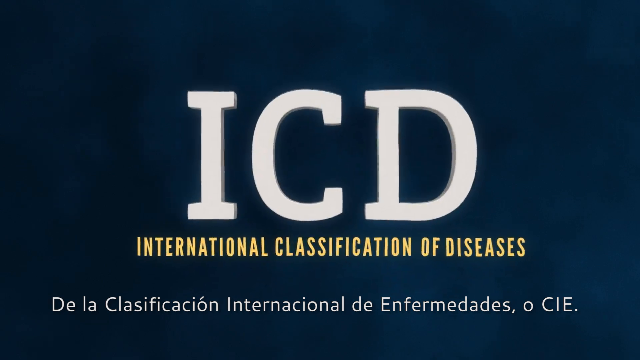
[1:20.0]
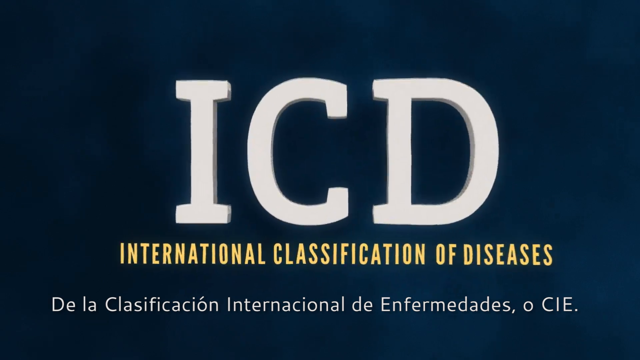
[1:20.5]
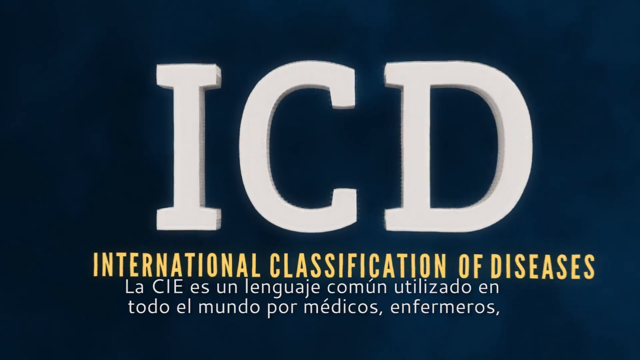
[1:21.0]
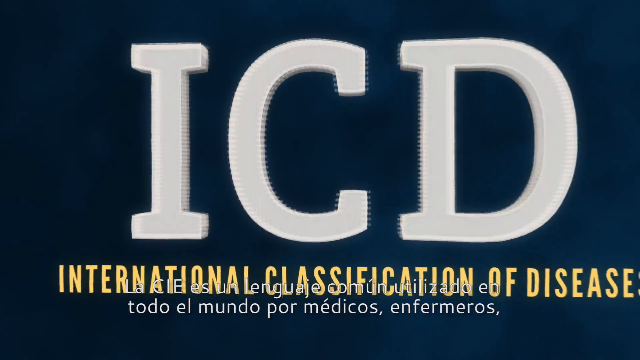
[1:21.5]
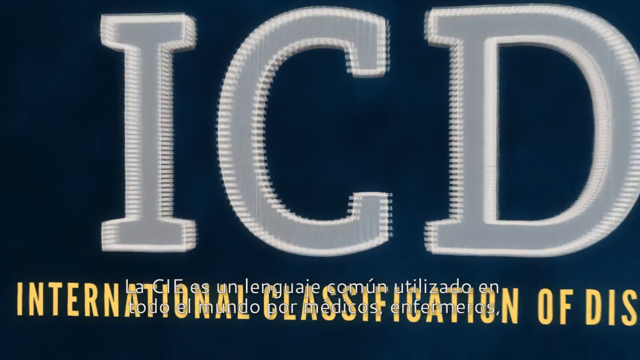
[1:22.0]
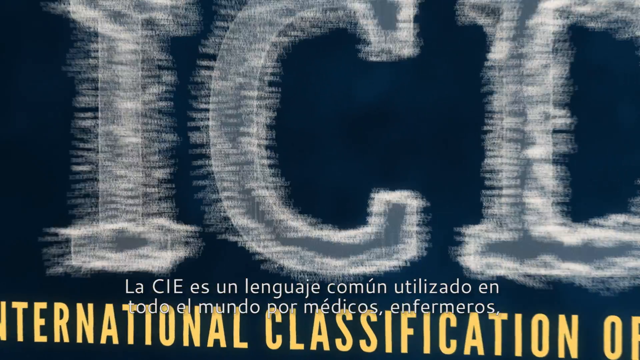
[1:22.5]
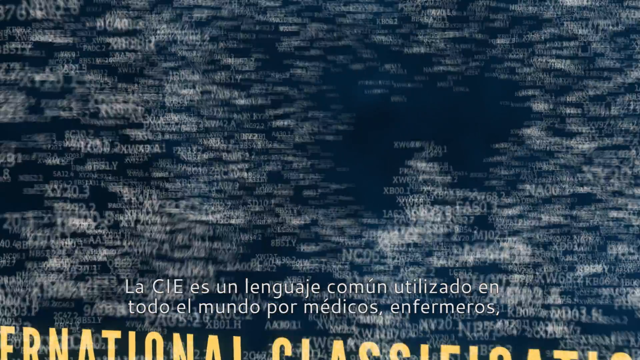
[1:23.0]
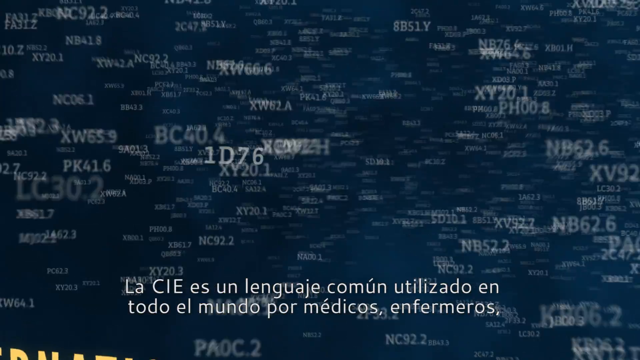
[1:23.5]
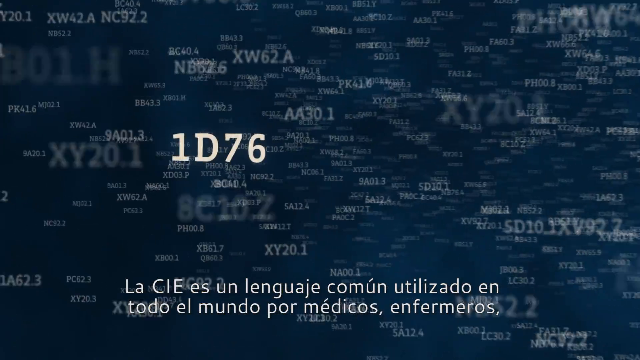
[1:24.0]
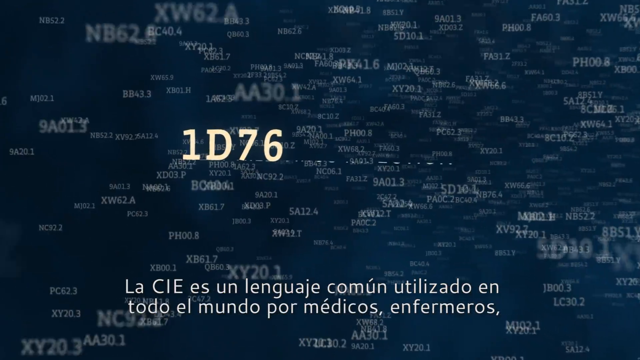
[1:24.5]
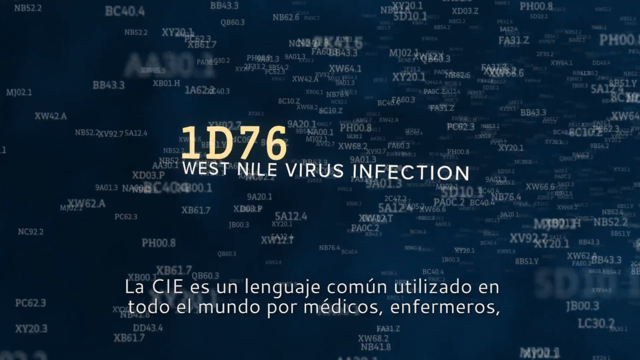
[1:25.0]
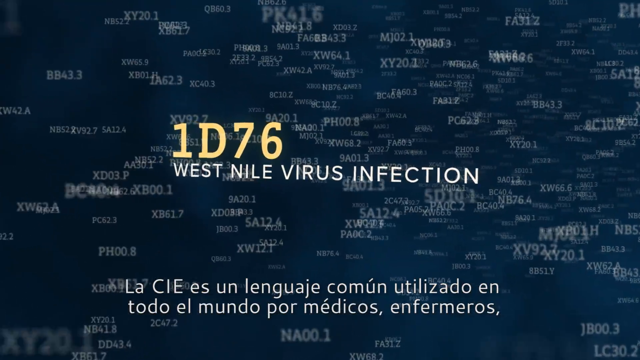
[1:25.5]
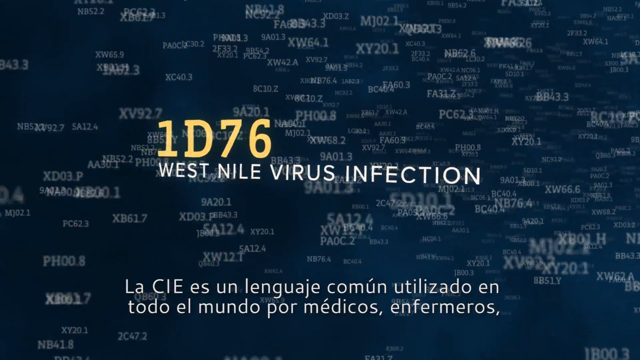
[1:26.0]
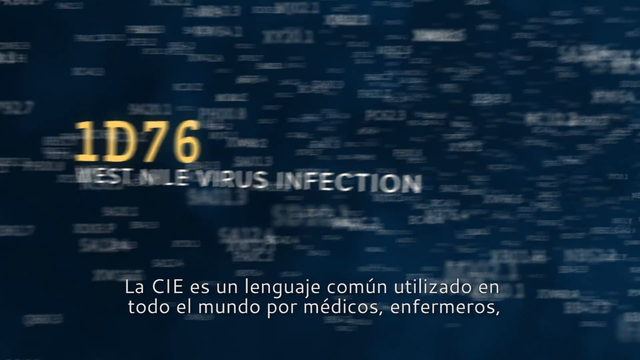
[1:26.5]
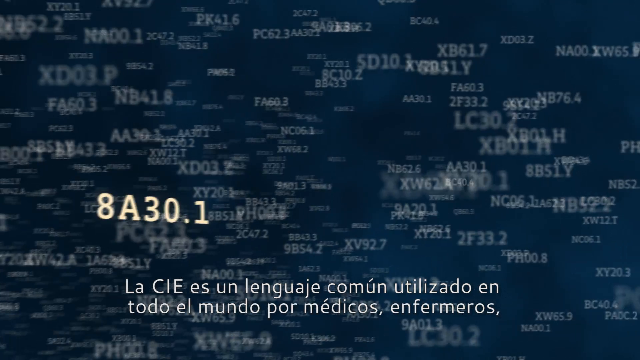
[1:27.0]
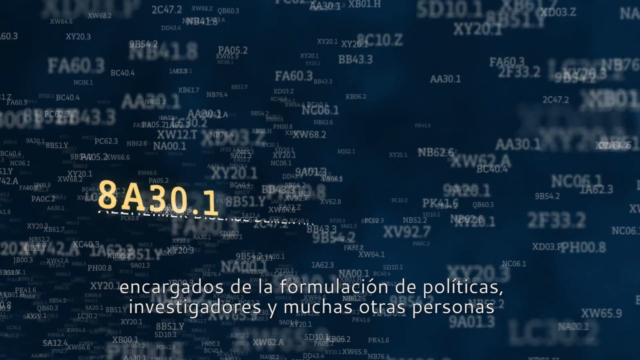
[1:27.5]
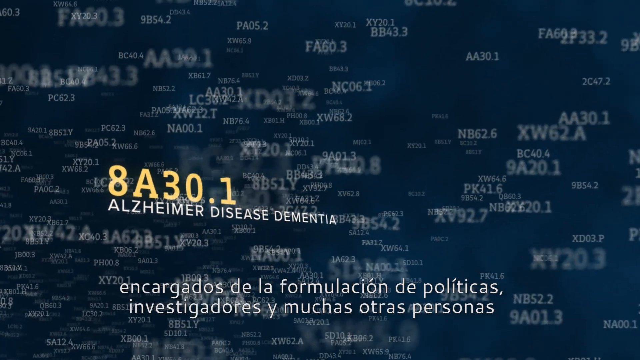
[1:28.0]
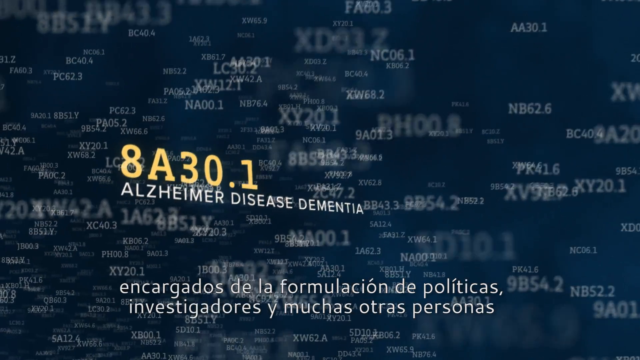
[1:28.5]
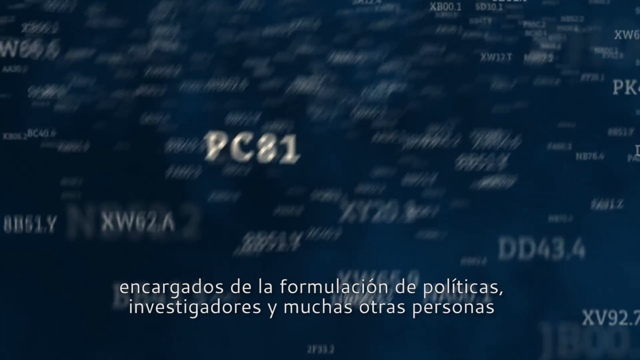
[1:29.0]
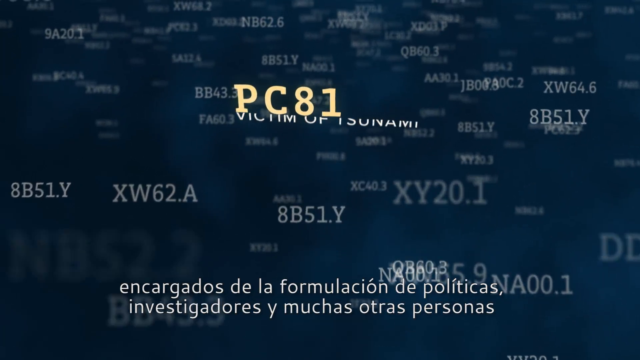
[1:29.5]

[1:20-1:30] On a dark navy blue, quite textured background that looks almost cloudy, yellow text written in a straight line in all capitals reads "International Classification of Diseases." On top of it are three large white letters reading "ICD." The camera pans in towards the letters, and the white letters seem to break up into lots of smaller words that zoom around the camera. The text "1D76 West Nile virus infection" appears, with many different words and letters in the background. The scene changes, and in the foreground the text reads "8A30.1 Alzheimer's disease dementia." The camera then moves, and the text reads "PC8.1 victim of tsunami."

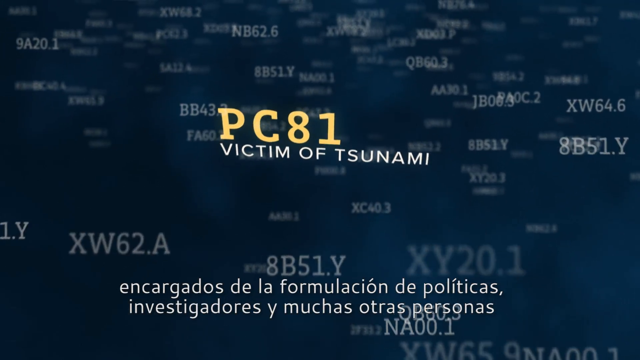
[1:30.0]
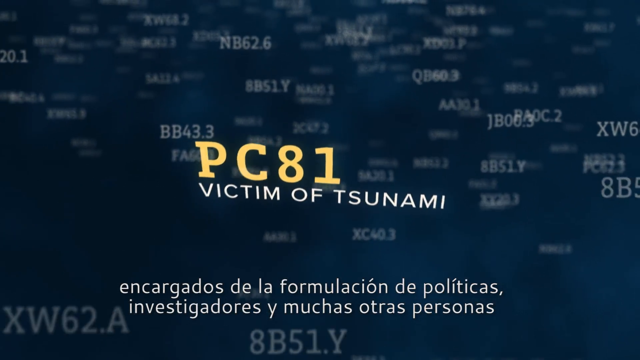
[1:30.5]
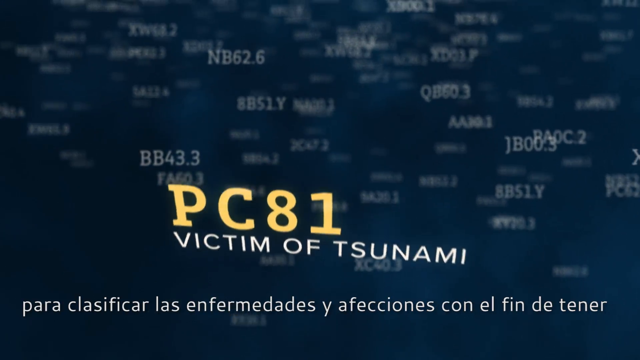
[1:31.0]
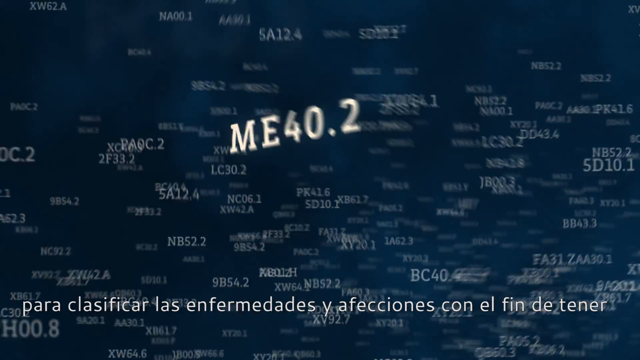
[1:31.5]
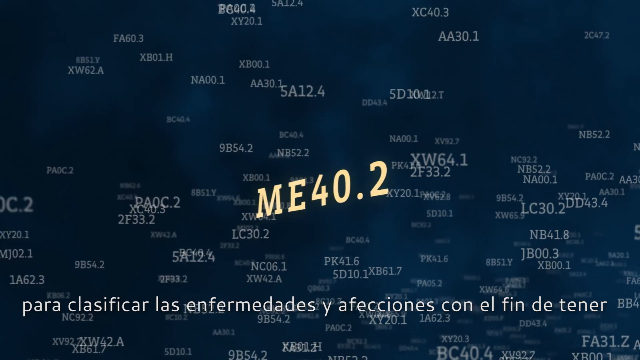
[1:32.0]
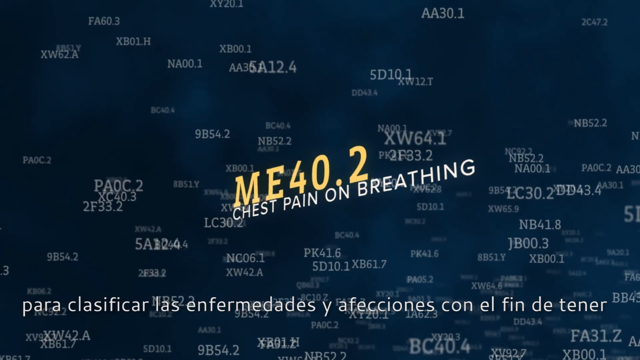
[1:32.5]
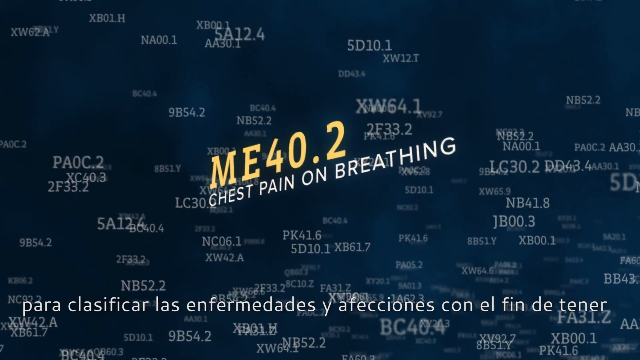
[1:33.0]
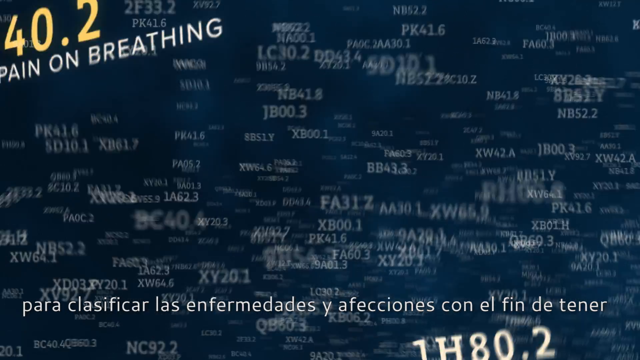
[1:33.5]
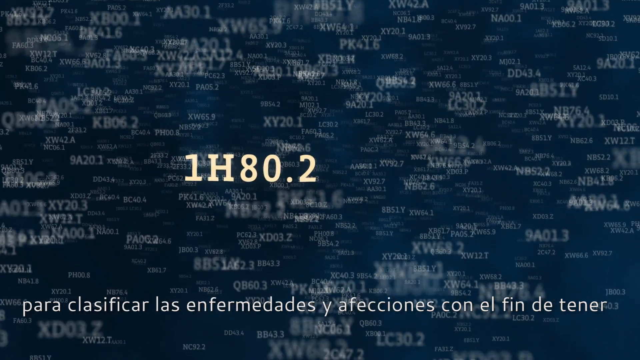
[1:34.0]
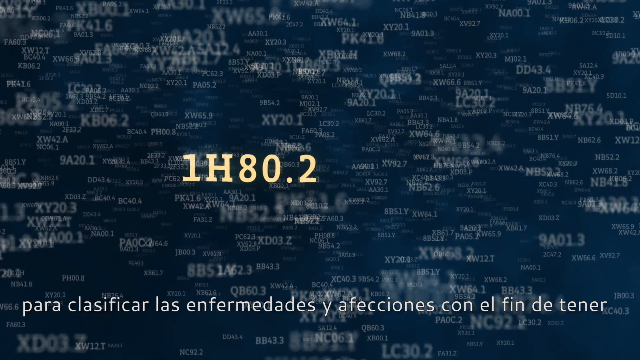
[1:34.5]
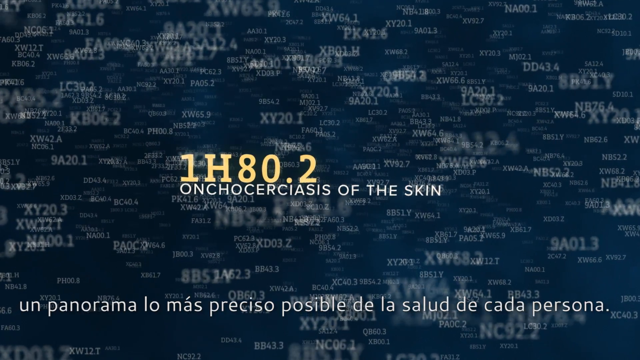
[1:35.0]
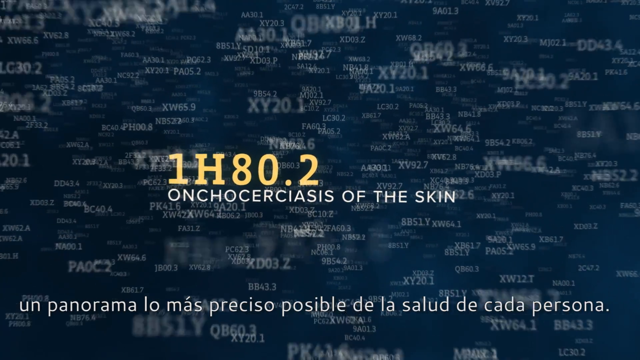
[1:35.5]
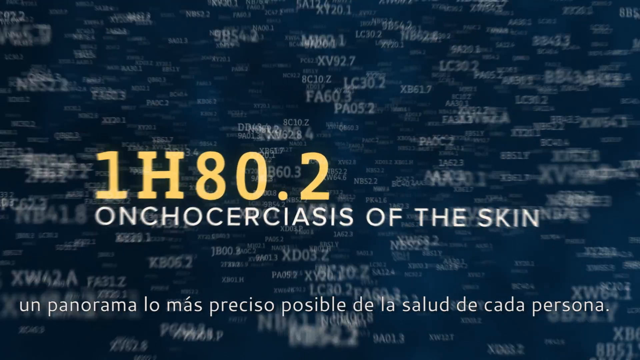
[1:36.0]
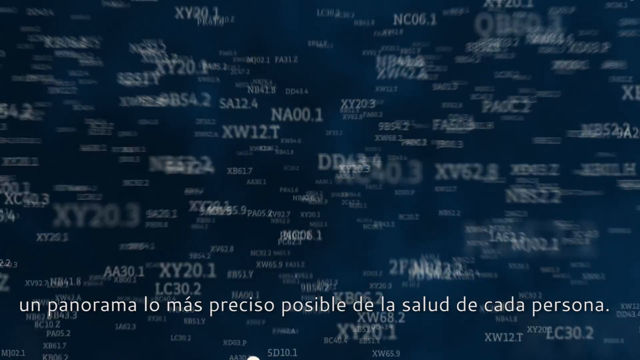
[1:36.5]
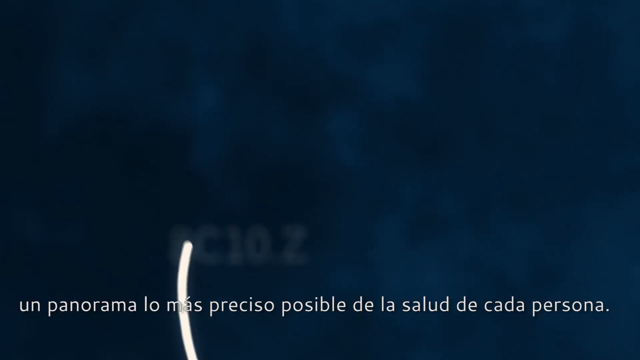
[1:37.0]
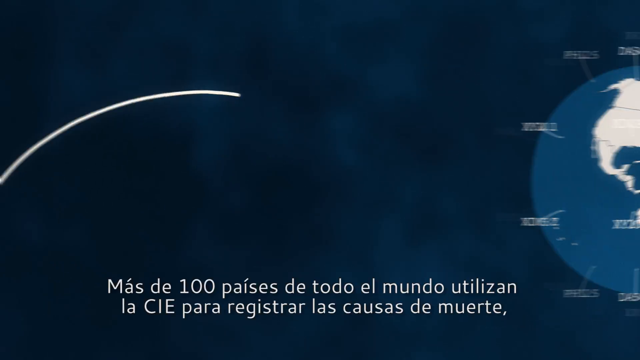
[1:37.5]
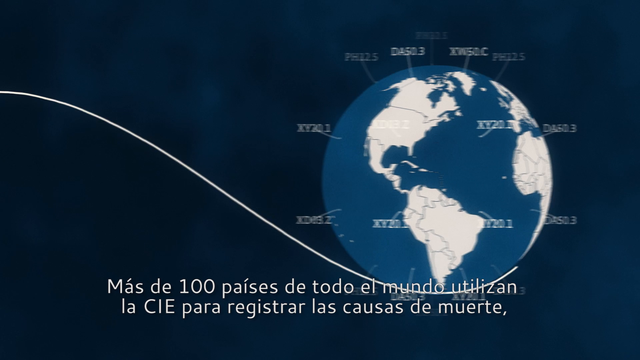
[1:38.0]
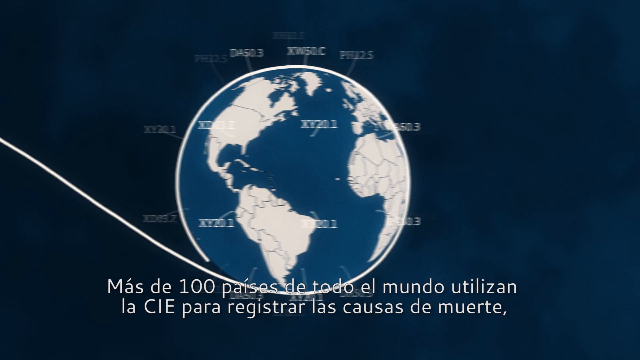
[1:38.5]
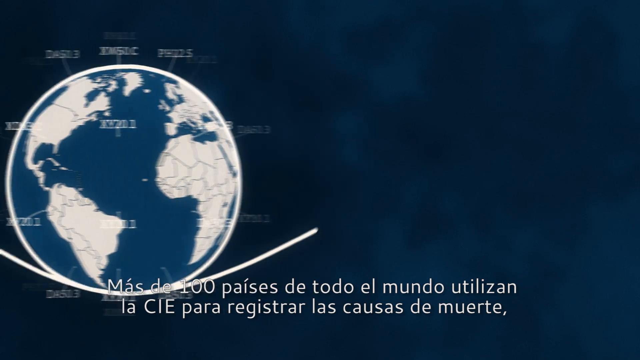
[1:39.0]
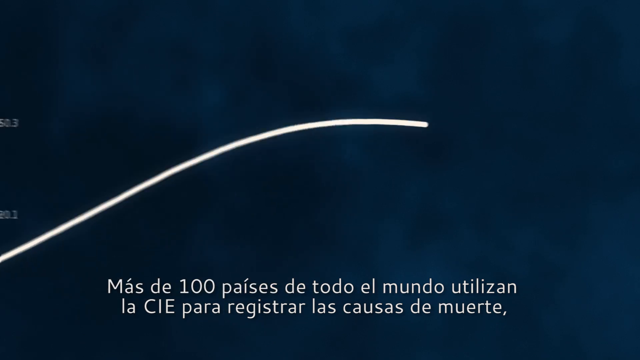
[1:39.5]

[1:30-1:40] On a dark blue background, lots of different words, letters and text are written, most of them faded and harder to read. In the foreground, yellow text reads "PC81" with "a victim of tsunami" underneath. The camera pans up to another section of the screen, where the words remain in the background and a new phrase appears in the foreground: "ME40.2 chest pain on breathing." The camera pans to a different space, showing "1H80.2 onchoceriasis of the skin." All the words then disappear, and a white line shoots up from the bottom of the screen and wraps itself around a graphic of a globe.